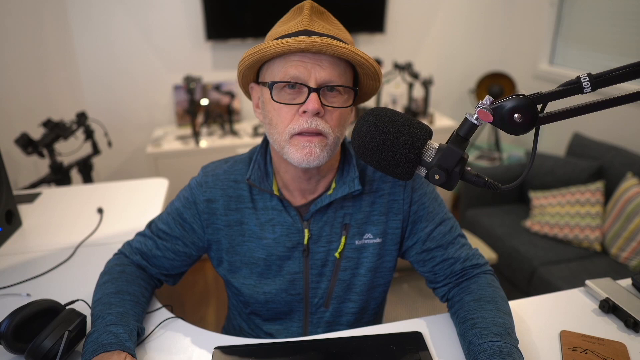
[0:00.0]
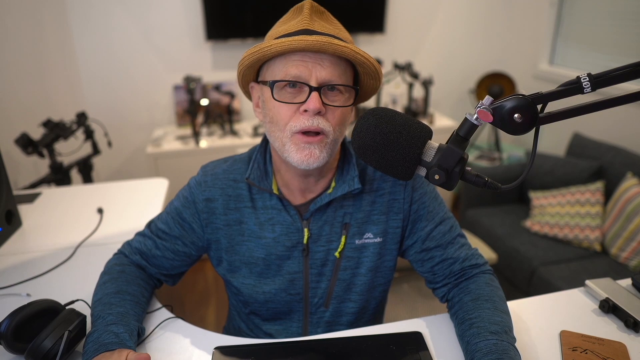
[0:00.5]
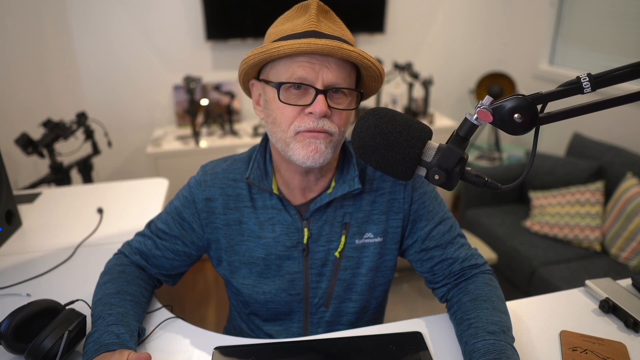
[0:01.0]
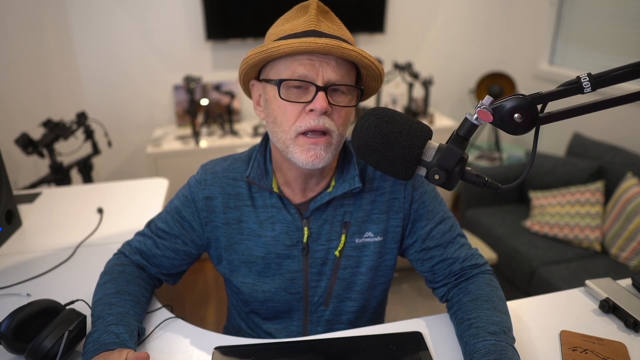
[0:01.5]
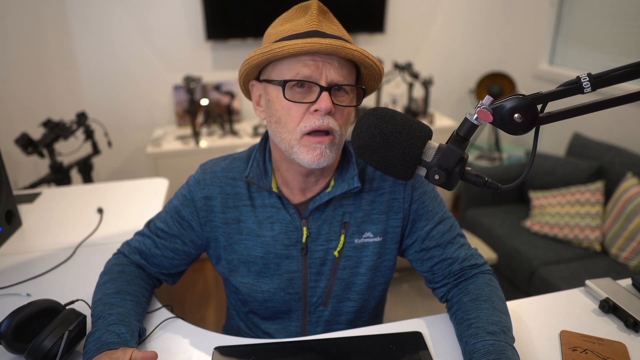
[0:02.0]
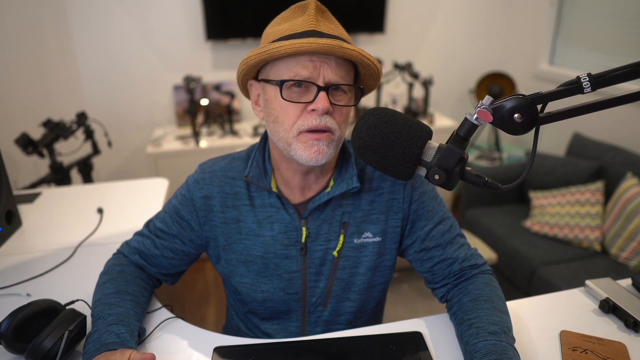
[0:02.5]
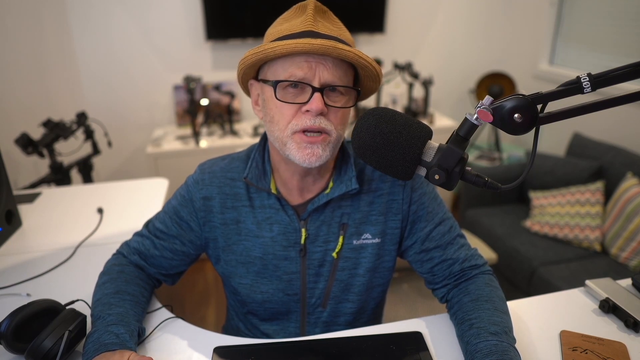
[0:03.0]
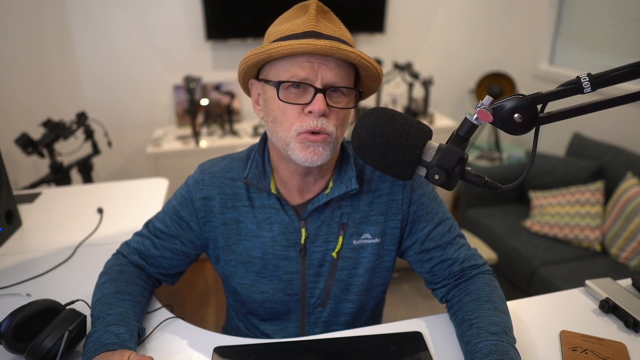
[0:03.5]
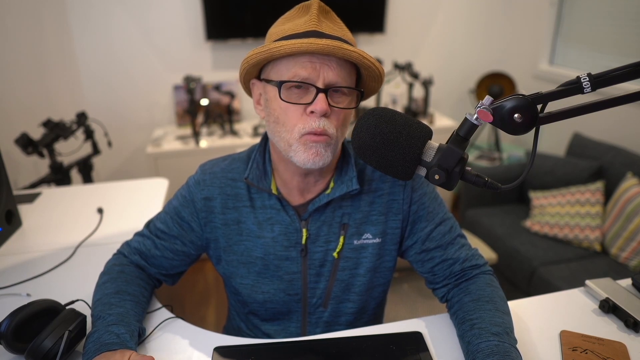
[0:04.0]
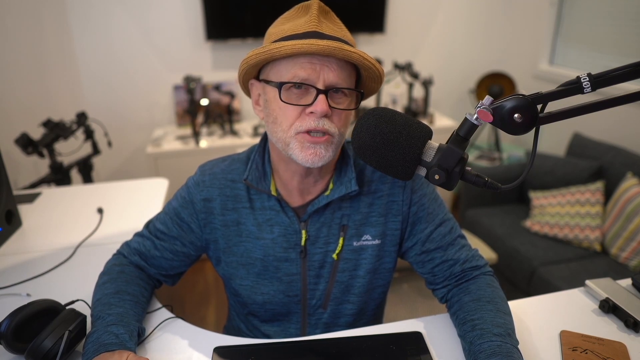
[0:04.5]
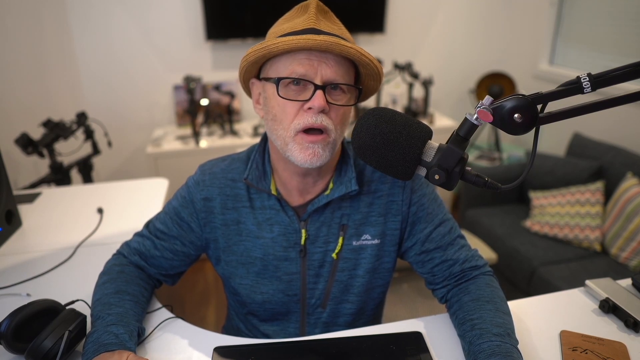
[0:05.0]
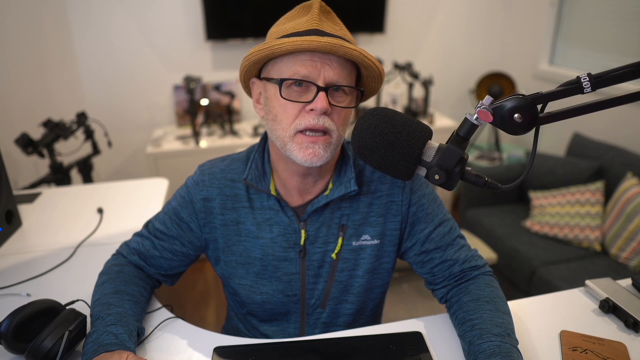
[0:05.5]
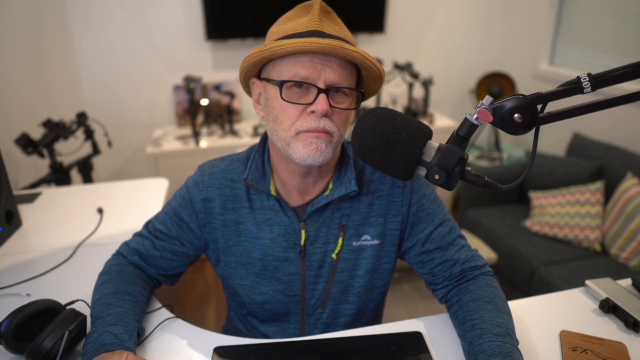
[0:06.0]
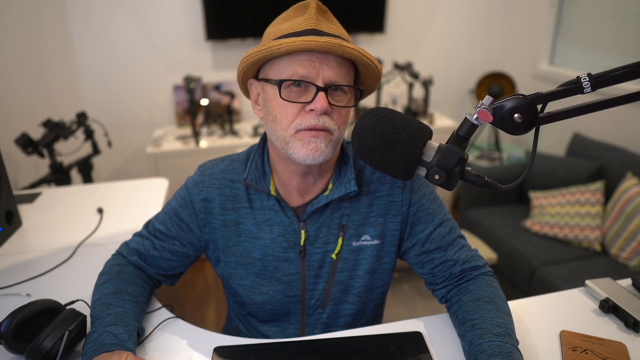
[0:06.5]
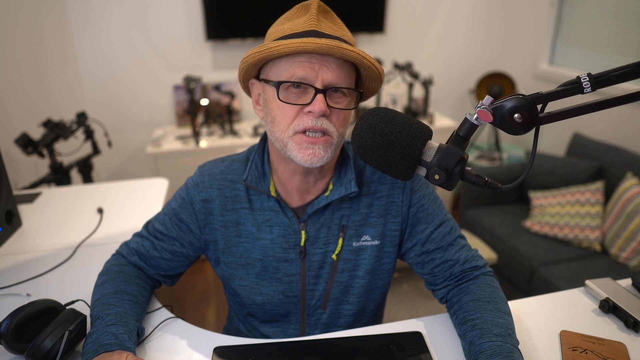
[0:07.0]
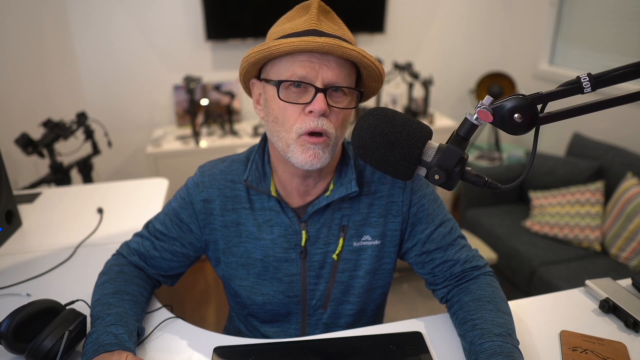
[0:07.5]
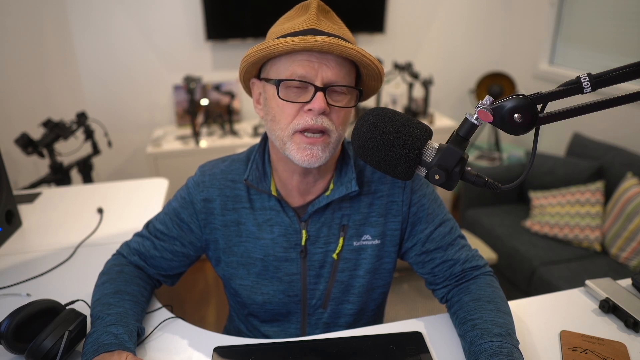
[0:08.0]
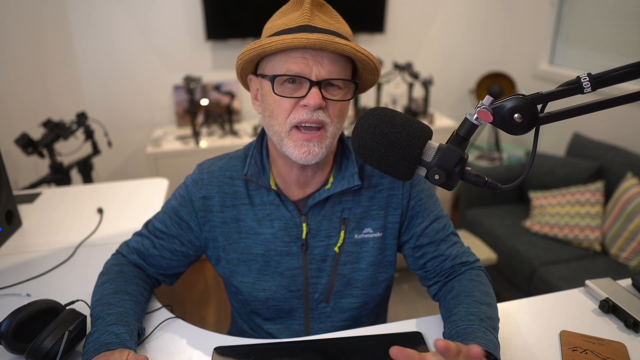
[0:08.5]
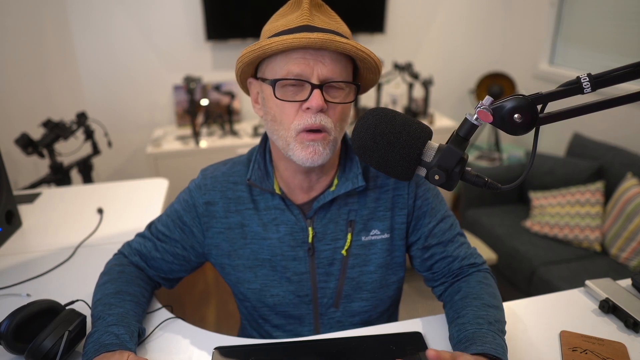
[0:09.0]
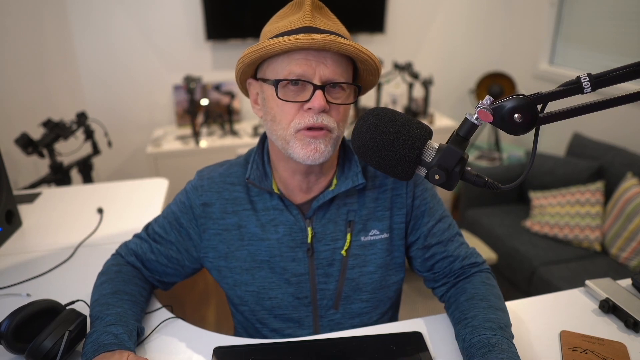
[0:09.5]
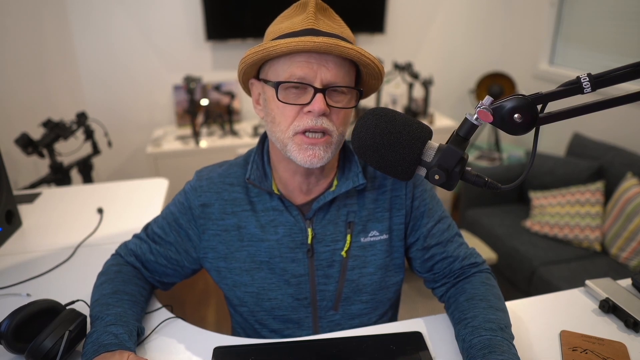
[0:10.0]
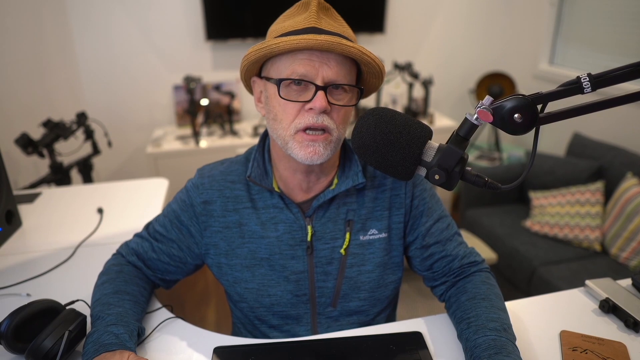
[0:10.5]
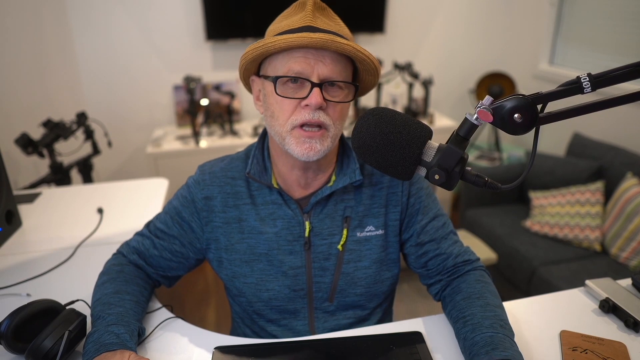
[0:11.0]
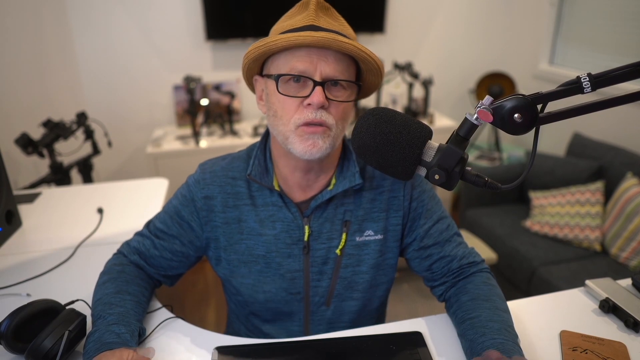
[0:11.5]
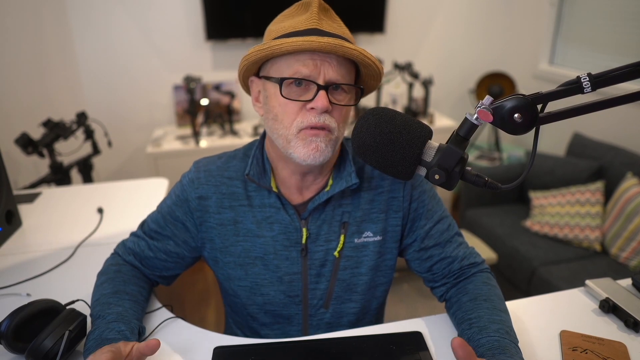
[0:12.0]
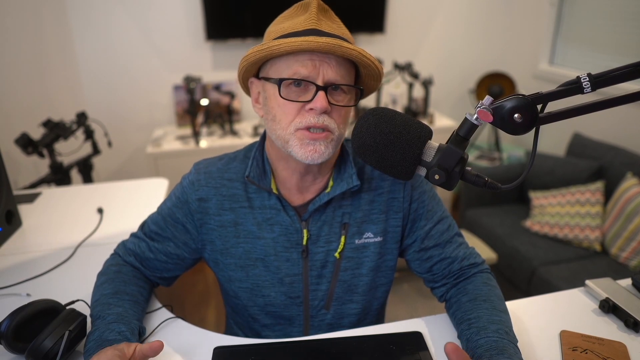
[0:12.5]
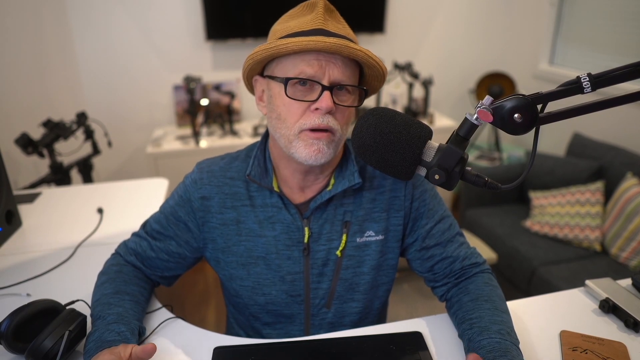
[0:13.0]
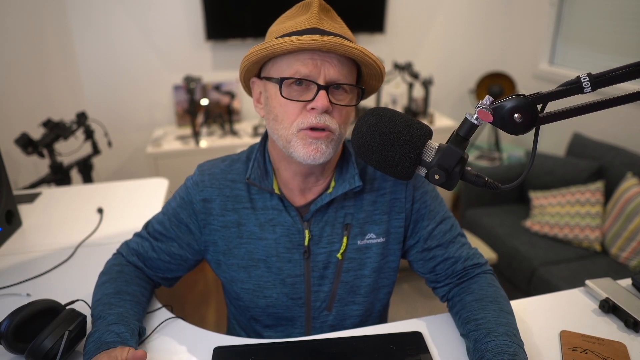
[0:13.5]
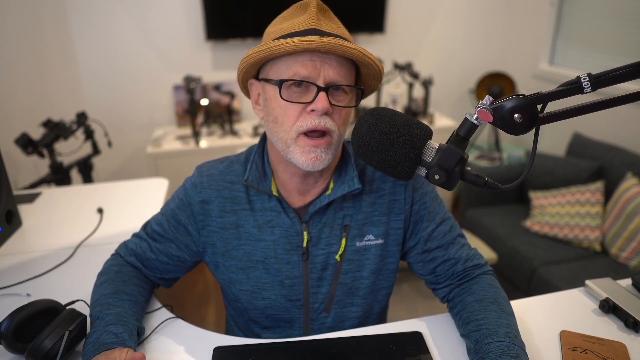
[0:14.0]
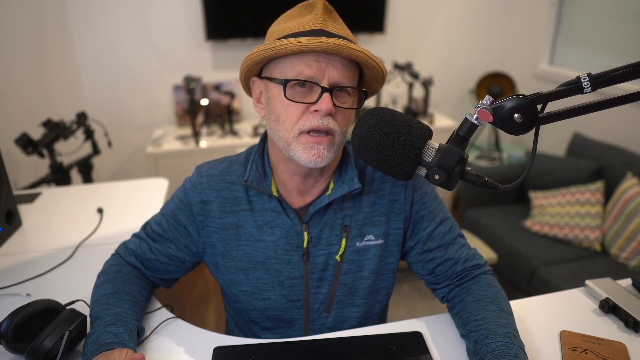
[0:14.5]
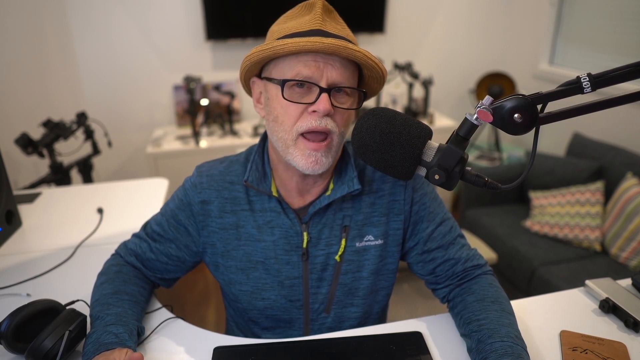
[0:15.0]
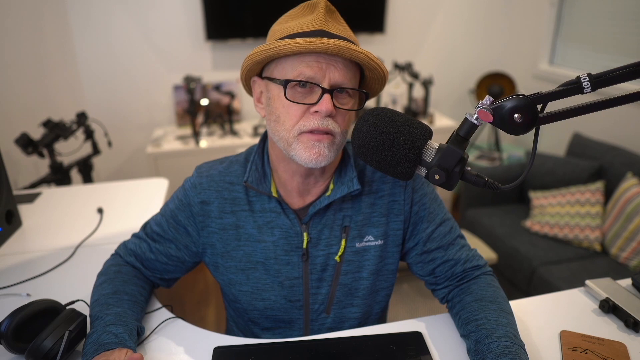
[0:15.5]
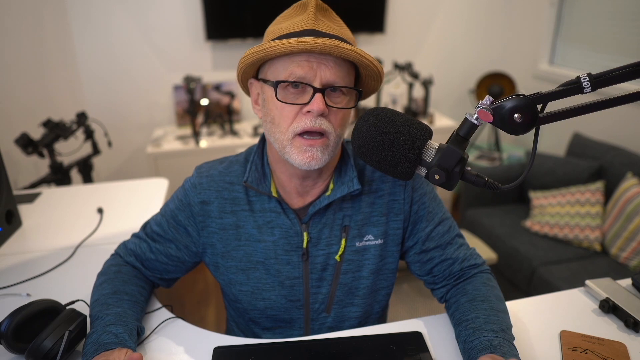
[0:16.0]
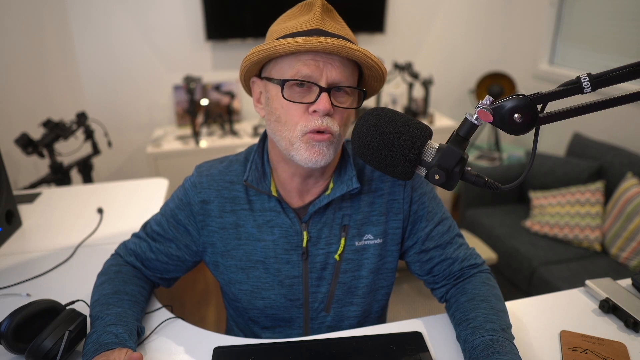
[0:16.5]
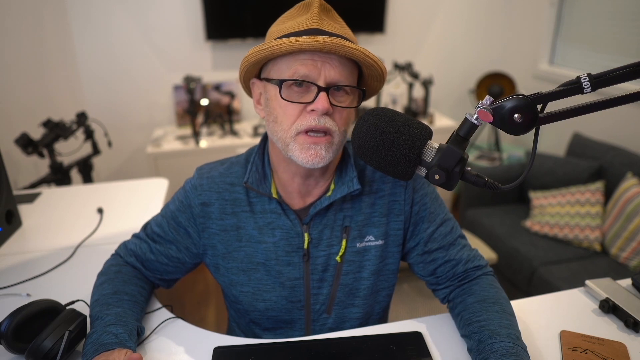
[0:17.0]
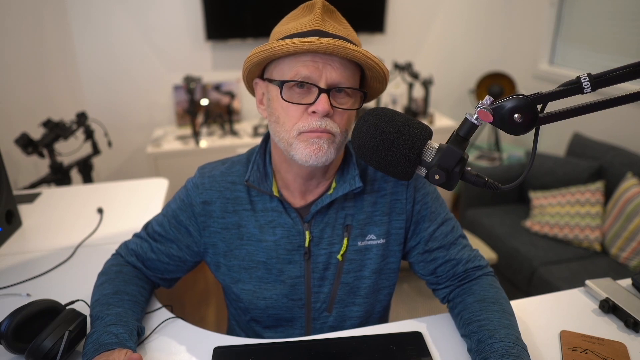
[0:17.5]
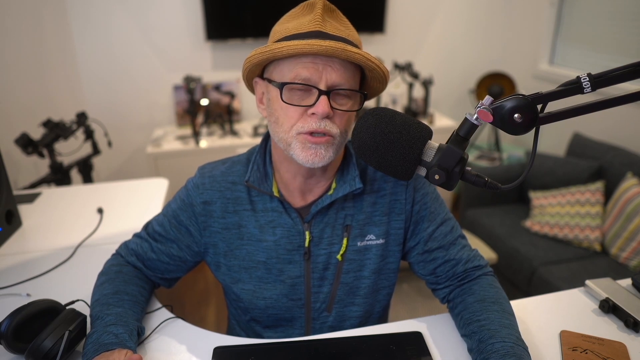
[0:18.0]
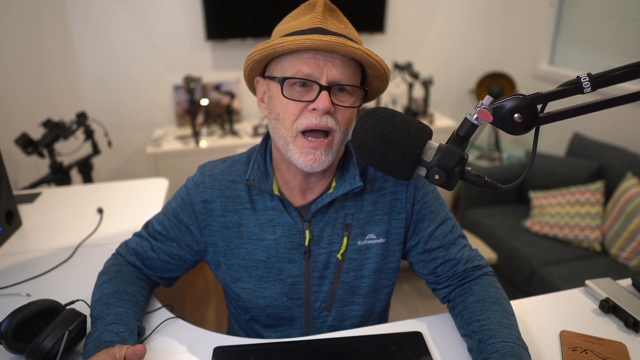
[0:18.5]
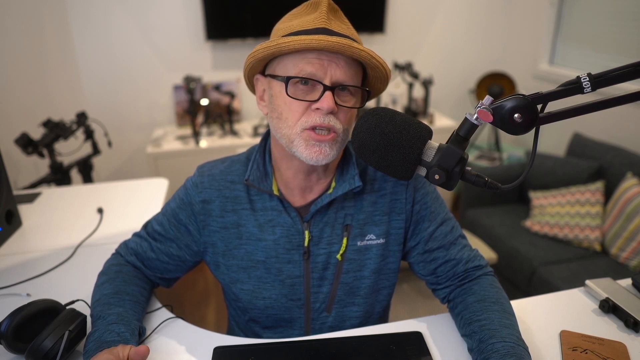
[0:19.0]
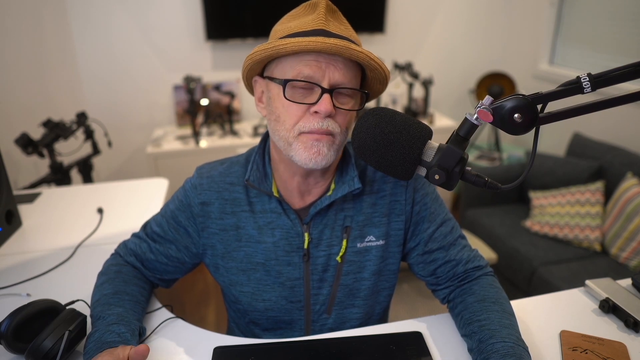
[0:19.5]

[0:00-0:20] An older gentleman who looks like someone from a podcast talks into a microphone that comes in from the right side of the camera. He has a gray mustache and gray beard, wears a caramel- or camel-colored hat and black-framed glasses with clear lenses, and has on a bluish long-sleeve top that looks like an athletic jacket with green zippers. A dark gray or black couch is on the right side of the screen and appears to have three pillows on it, one the same color as the couch. There are two white desks, one directly behind him and one on the left side of the screen.